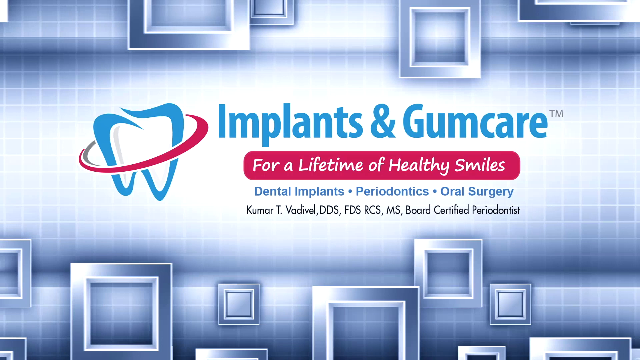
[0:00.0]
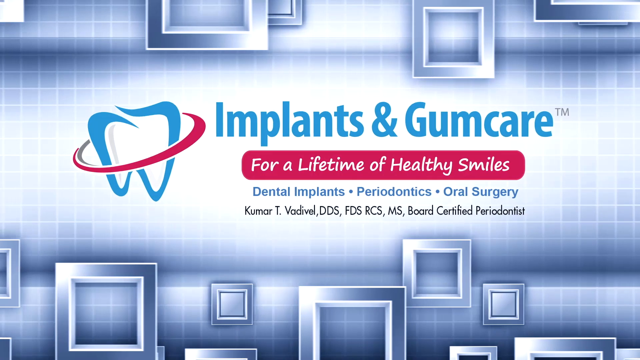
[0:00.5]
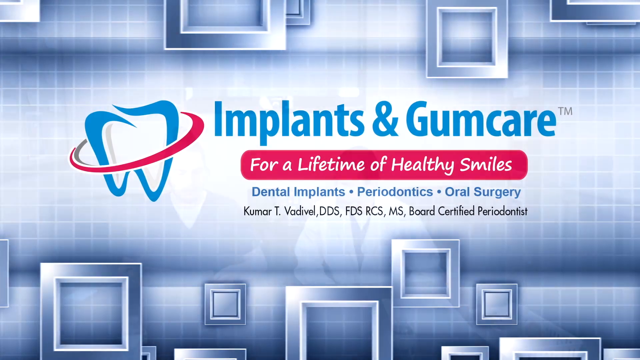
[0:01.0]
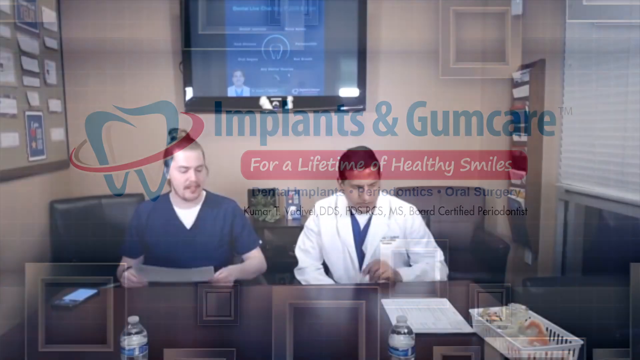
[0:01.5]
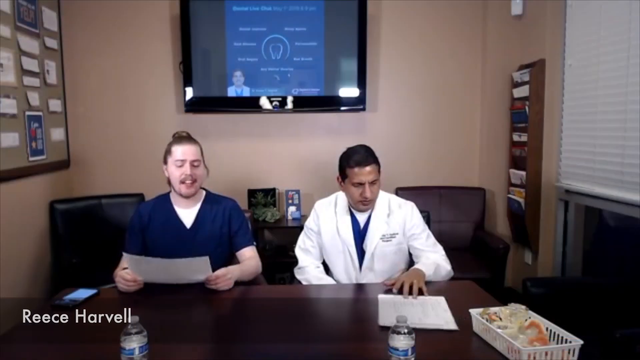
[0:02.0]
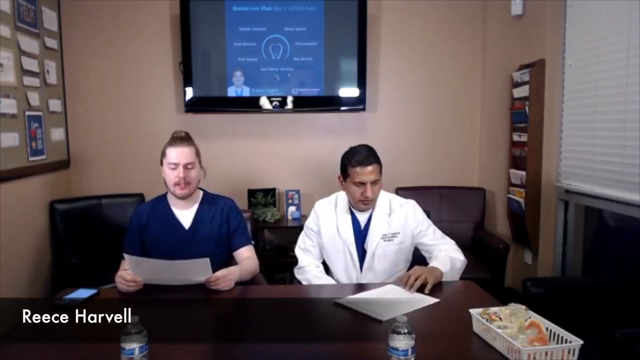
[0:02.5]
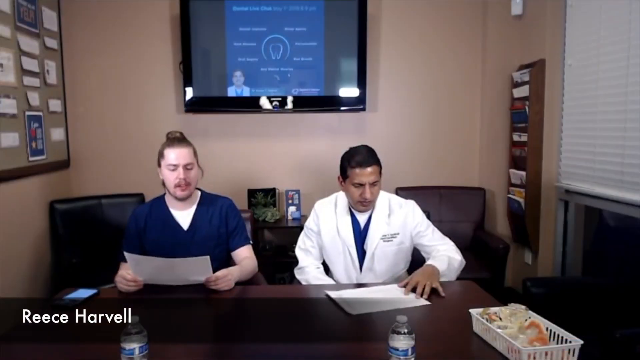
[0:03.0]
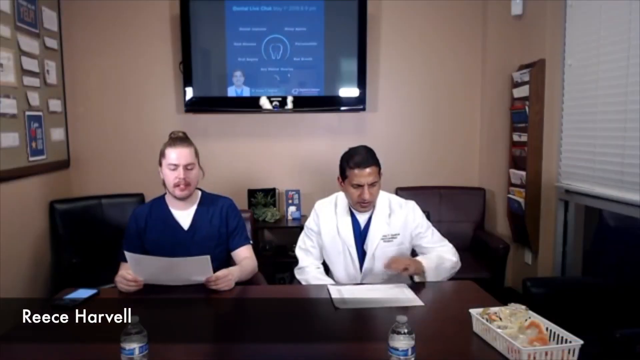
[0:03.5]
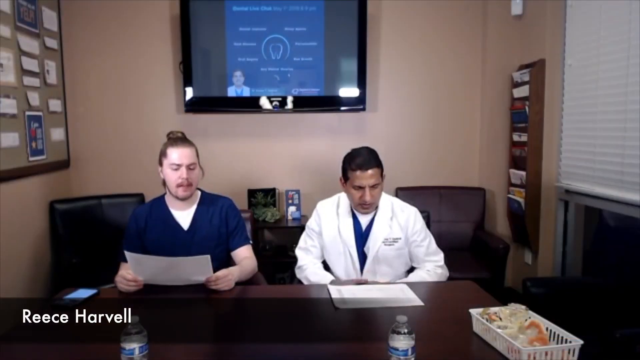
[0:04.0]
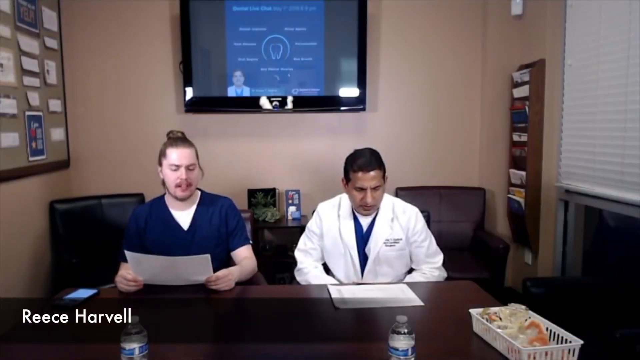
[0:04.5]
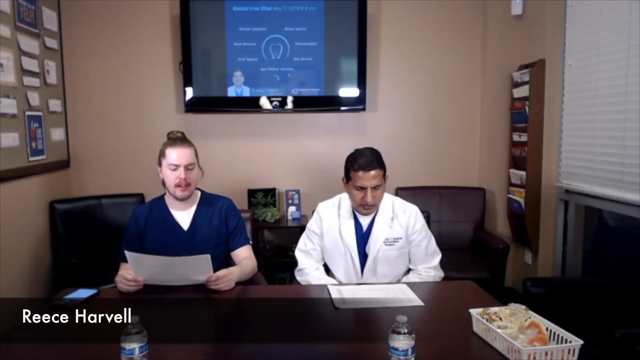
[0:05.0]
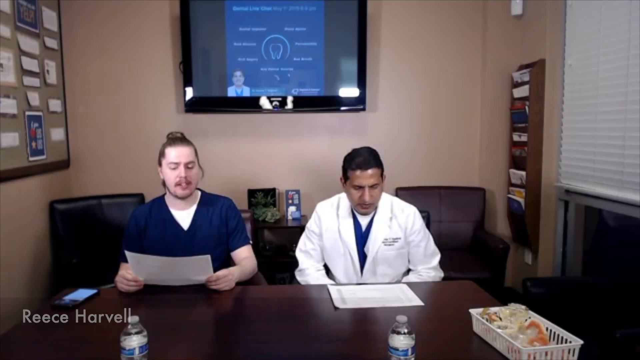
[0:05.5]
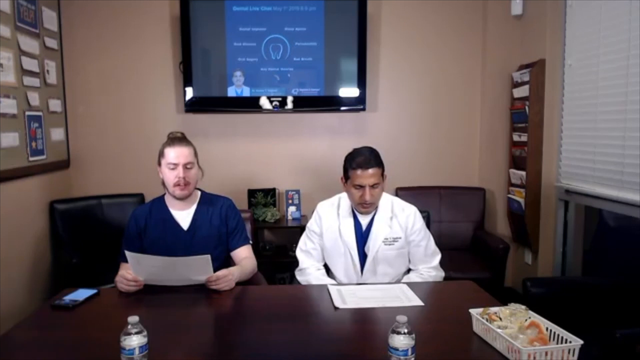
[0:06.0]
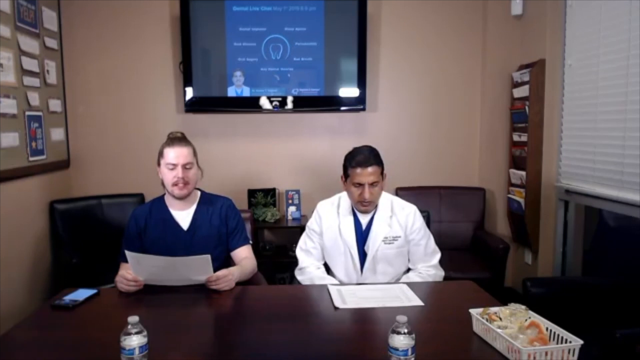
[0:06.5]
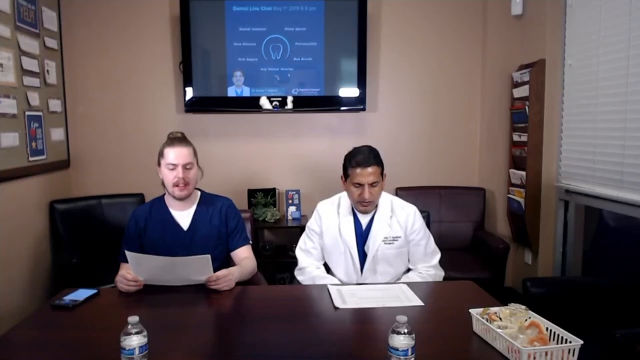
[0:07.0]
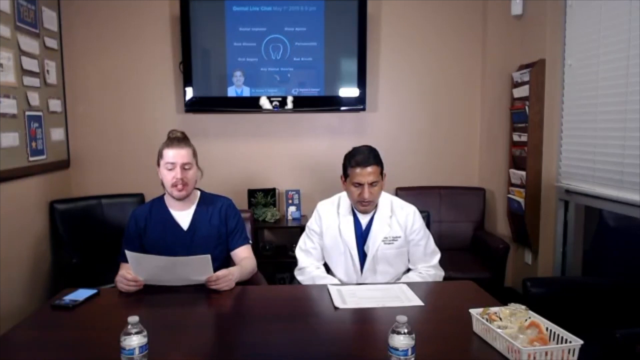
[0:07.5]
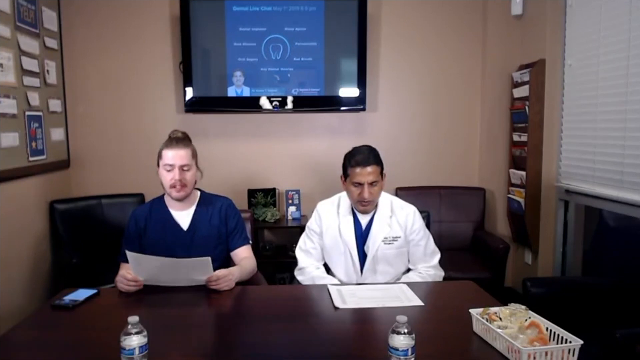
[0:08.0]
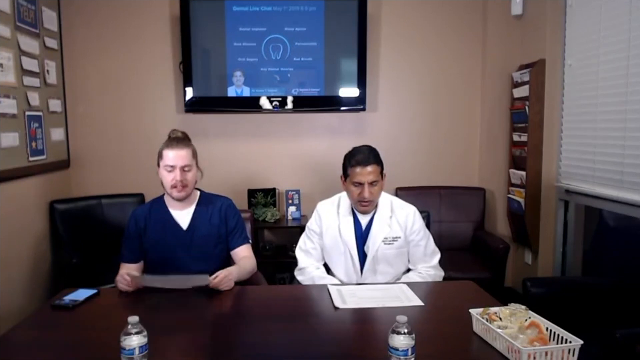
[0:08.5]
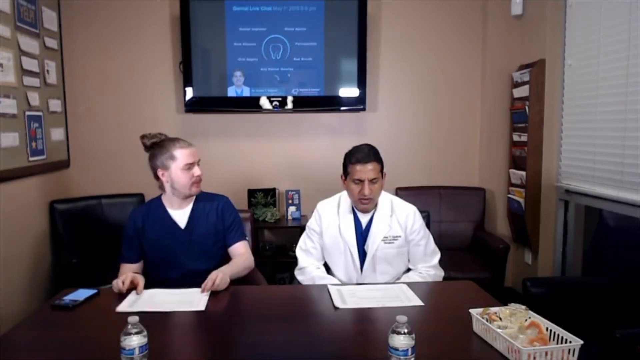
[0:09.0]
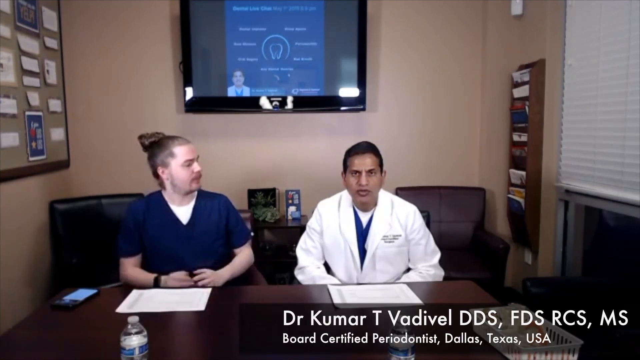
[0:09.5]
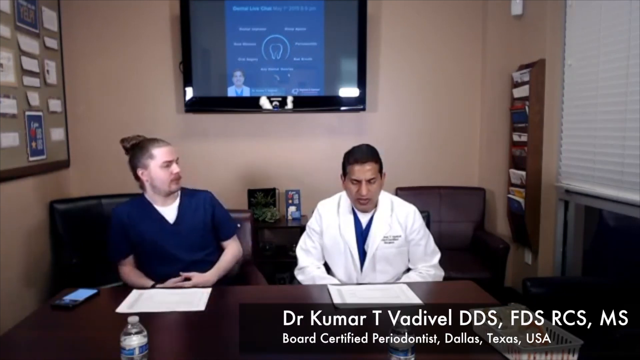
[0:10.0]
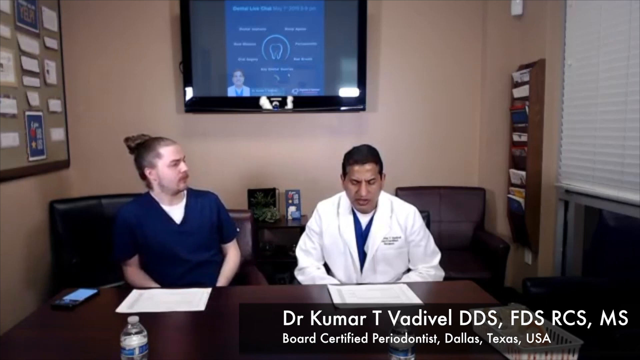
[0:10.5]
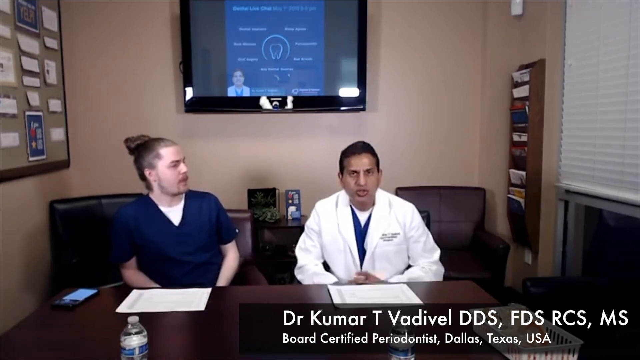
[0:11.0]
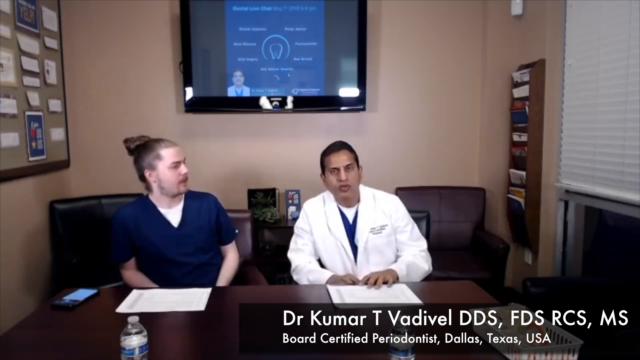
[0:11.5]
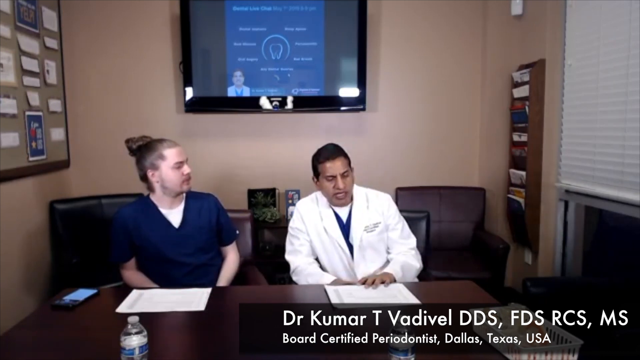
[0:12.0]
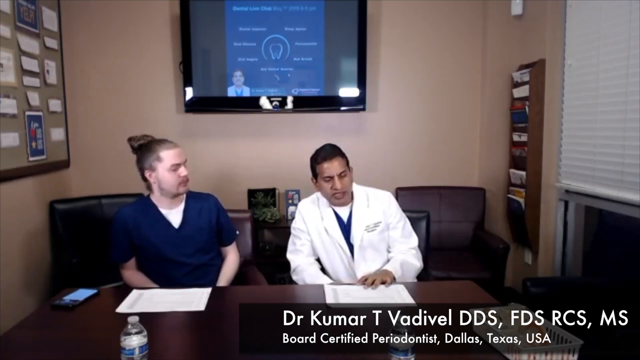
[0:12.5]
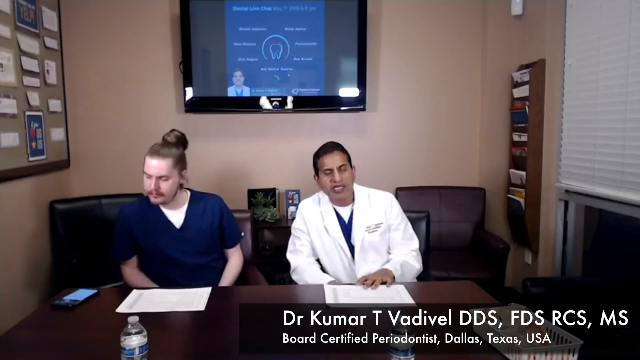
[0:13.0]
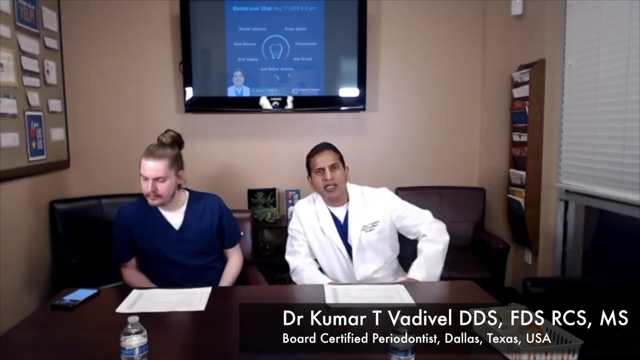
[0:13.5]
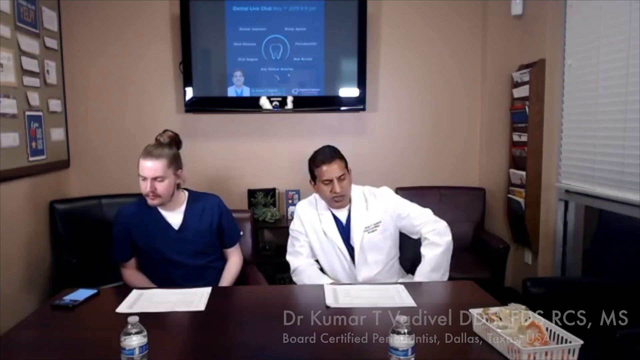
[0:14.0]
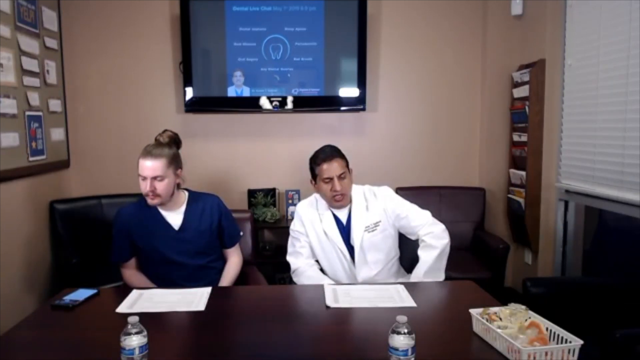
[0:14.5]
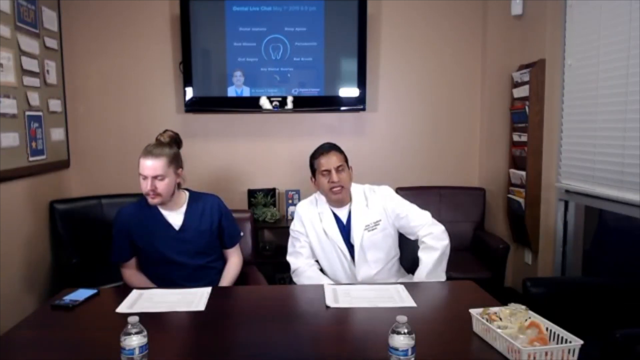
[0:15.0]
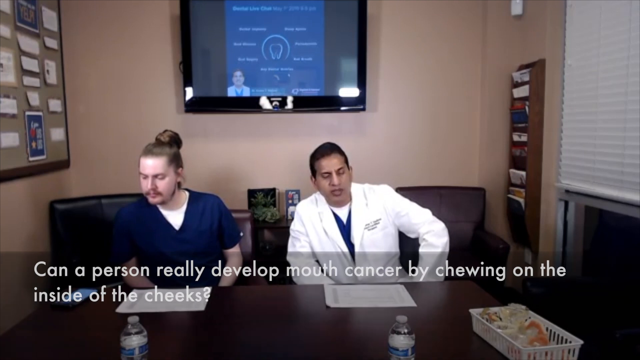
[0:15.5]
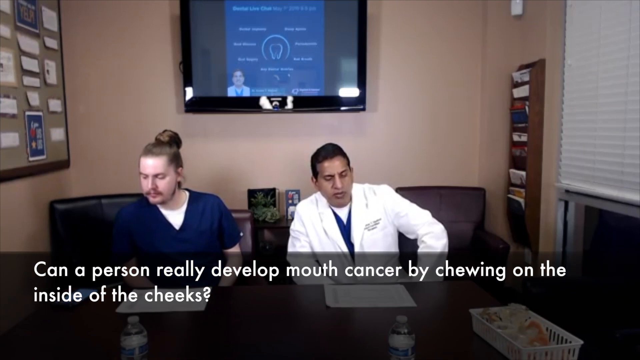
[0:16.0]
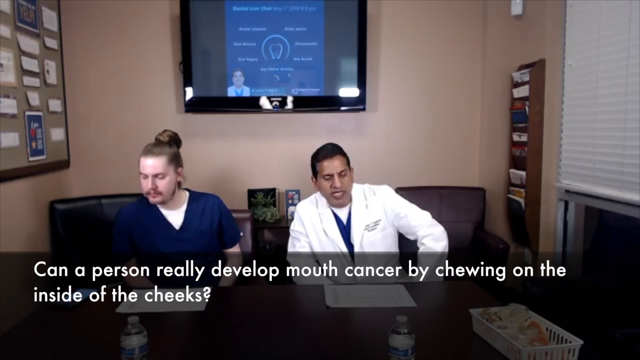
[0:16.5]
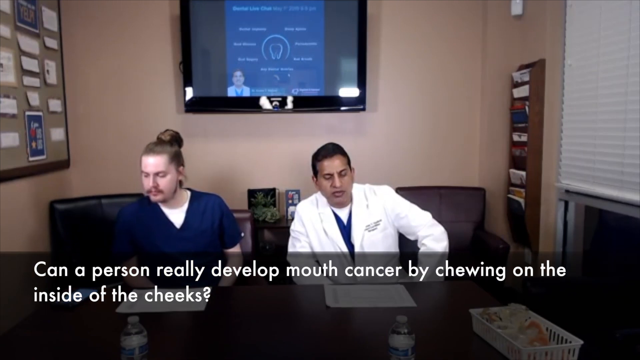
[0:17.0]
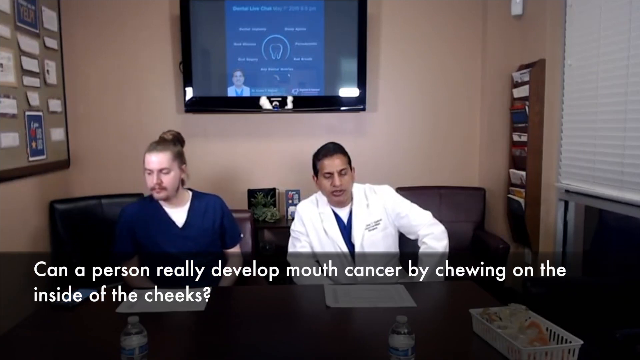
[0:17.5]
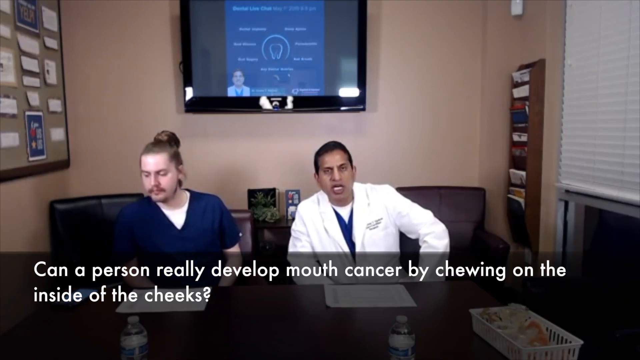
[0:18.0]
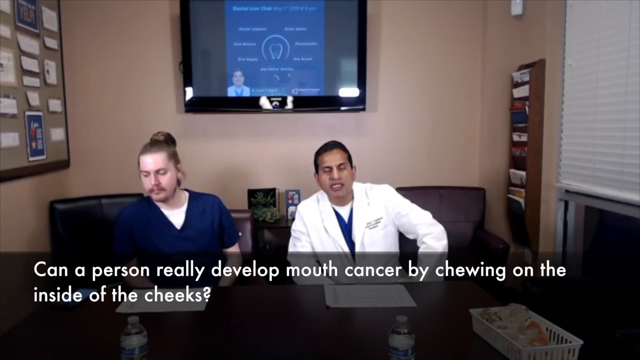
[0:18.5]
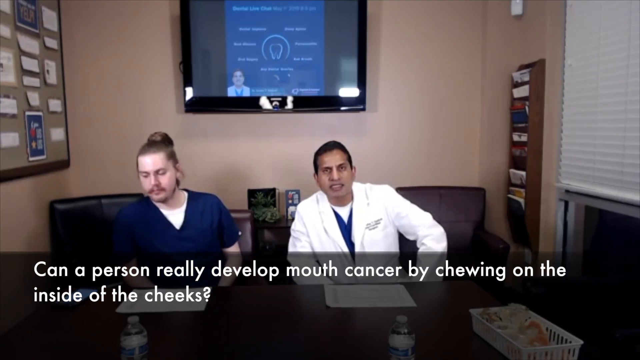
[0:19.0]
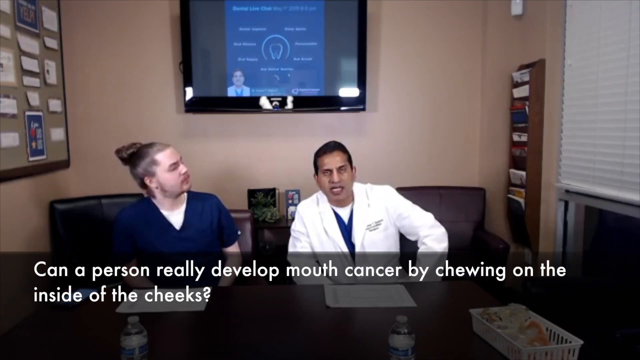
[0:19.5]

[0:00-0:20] The video opens on a promotional page for implants and gum care. The tagline, "for a lifetime of healthy smiles," appears in white text on a red banner. Below it the page reads "dental implants, periodontics, oral surgery," followed by more information with the doctor's name. Two men then sit behind a desk talking on camera. The man on the right wears a doctor's smock and the man on the left wears a blue scrub top. Both have pieces of paper in front of them. The man in blue holds his paper up in front of him and reads from it, then sets it down on the table, and the man in the doctor's smock begins talking. As he talks, text appears on the screen: "can a person really develop mouth cancer by chewing on the inside of the cheeks?" This is apparently the question the doctor is answering. He moves his hand from the table and sets it down in his lap, looks down at the piece of paper as he talks, and briefly looks up at the camera. They are in an office setting with a TV screen on the wall behind them.